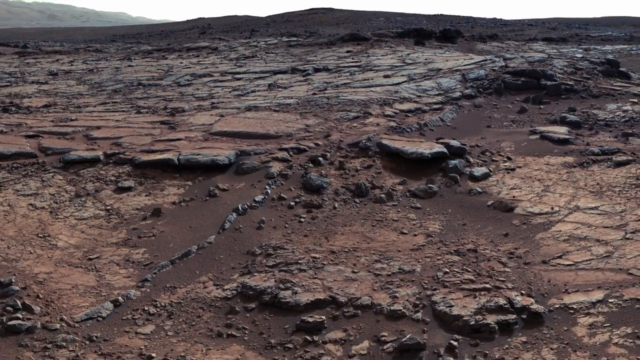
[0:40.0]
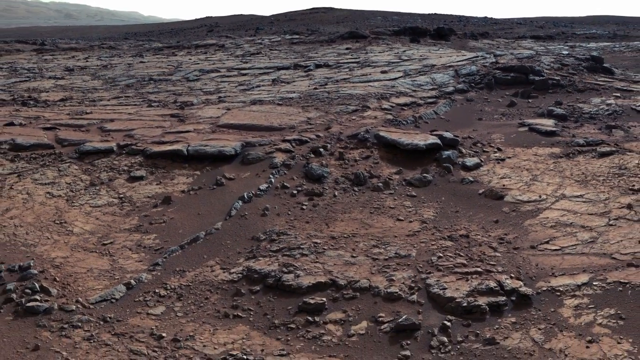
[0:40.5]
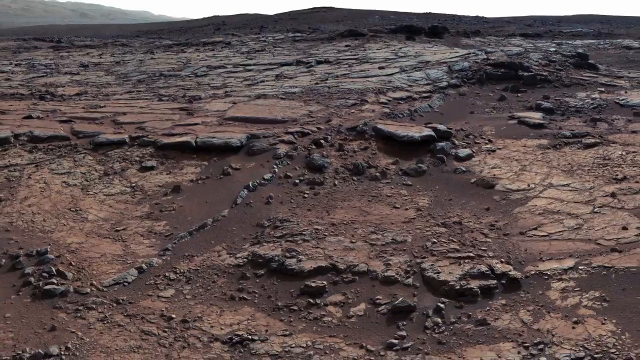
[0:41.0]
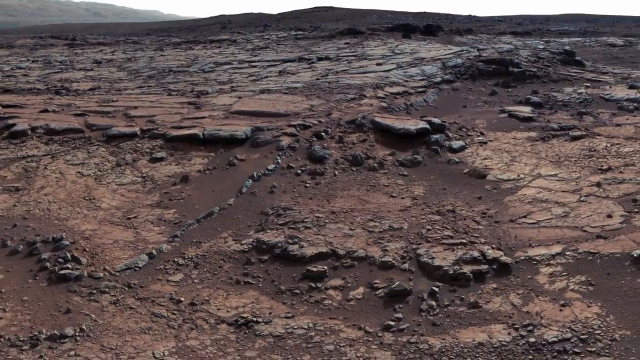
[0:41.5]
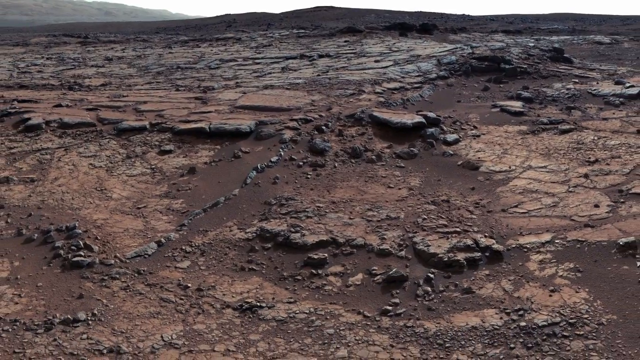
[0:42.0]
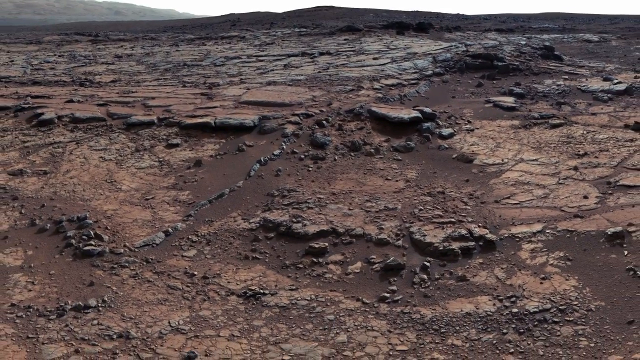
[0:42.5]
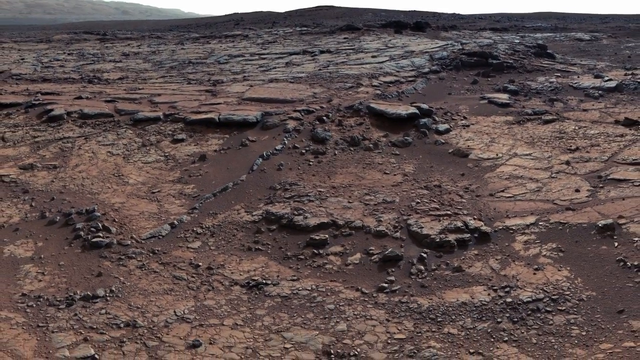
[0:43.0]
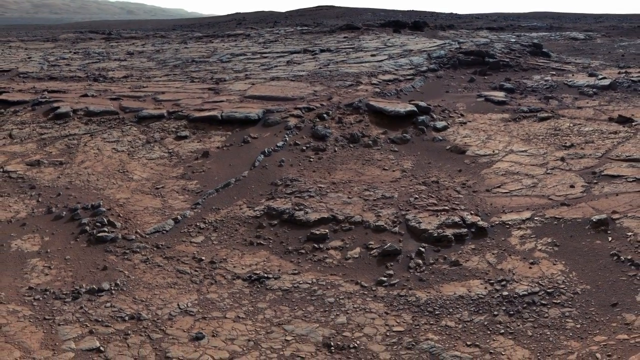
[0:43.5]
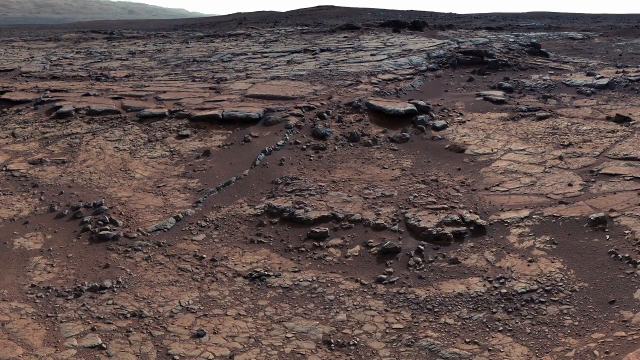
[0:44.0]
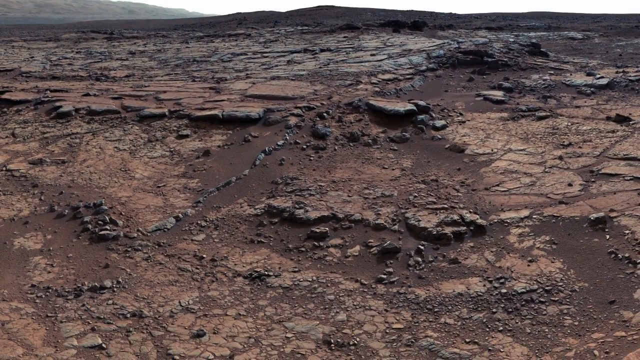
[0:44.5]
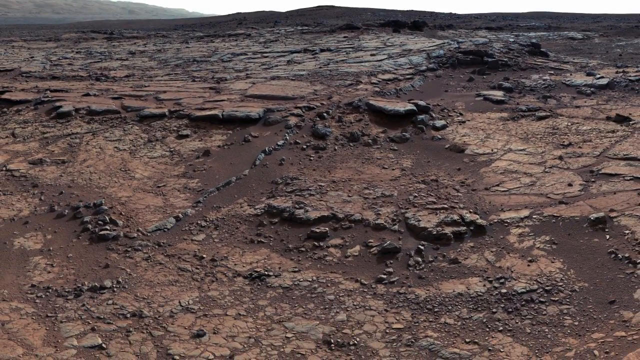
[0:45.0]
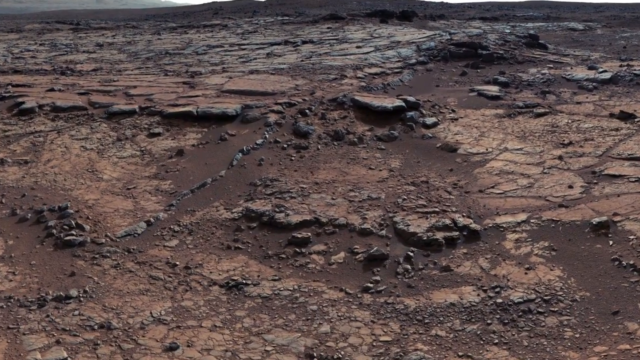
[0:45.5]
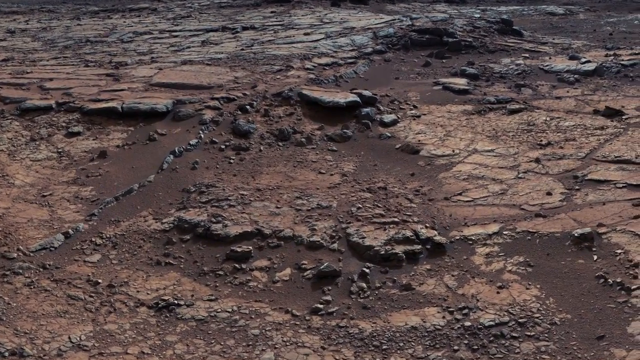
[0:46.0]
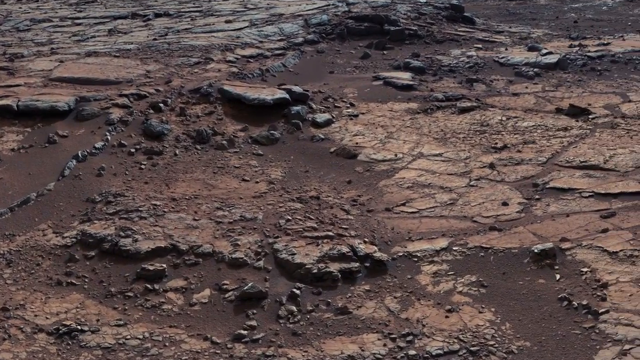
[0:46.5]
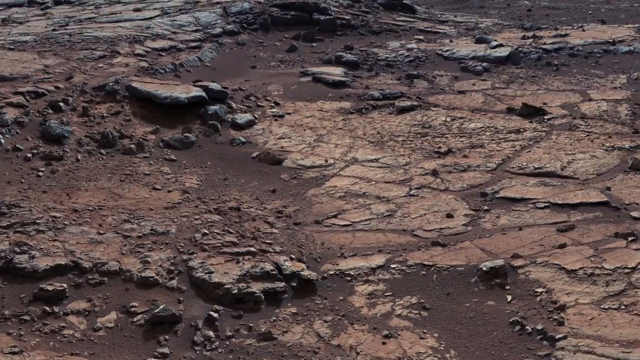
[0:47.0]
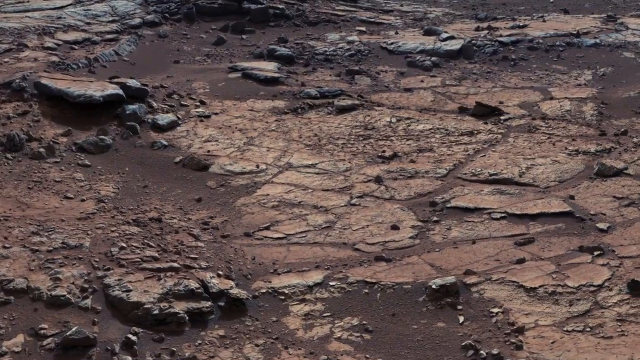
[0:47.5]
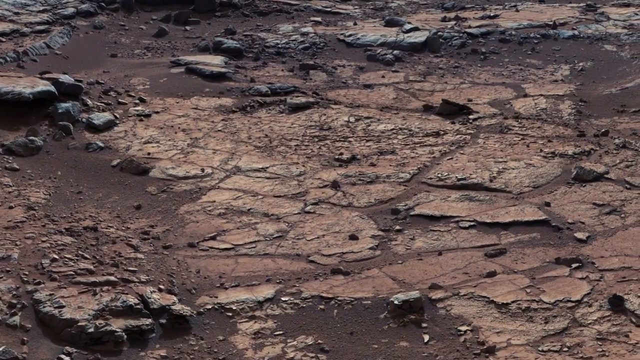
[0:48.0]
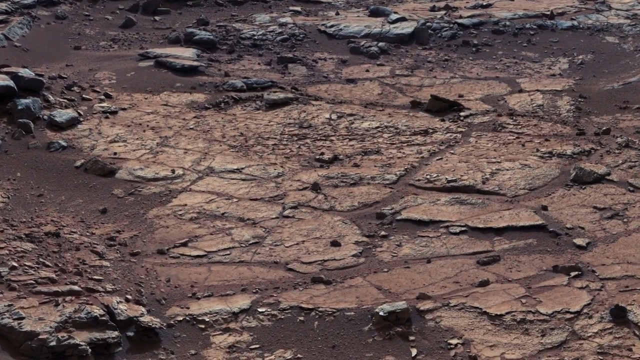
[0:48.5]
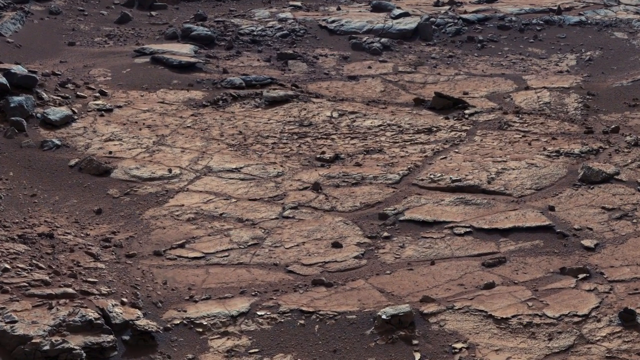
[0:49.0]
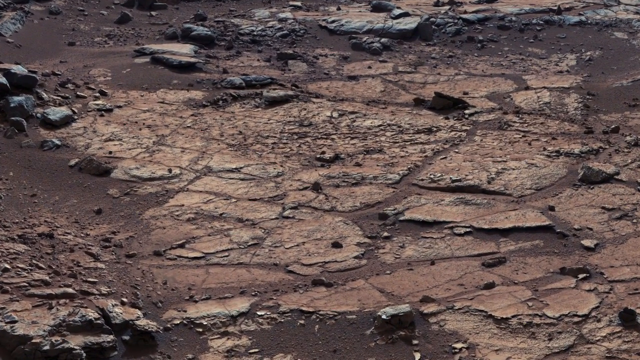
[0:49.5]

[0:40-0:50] Close-ups of the Mars project continue. The pictures zoom in and out to give a closer look. This picture shows none of the equipment; it zooms in and out across an expansive area of Mars that seems never-ending, with what looks like some mountains near the end and what looks like a lot of rocks or debris. It is the same picture, with different parts of Mars shown close up.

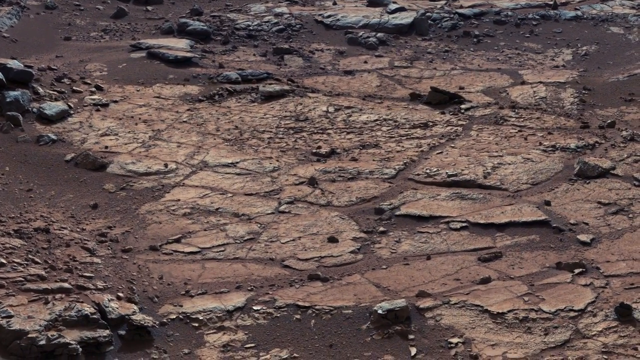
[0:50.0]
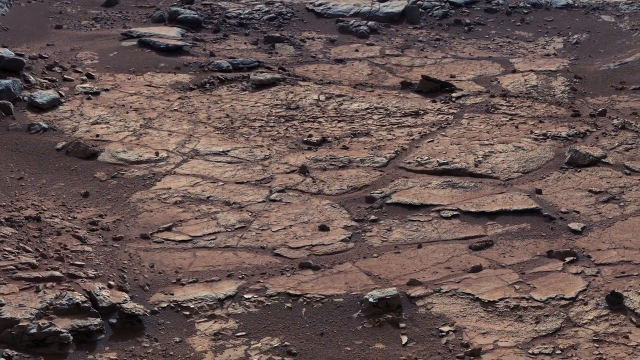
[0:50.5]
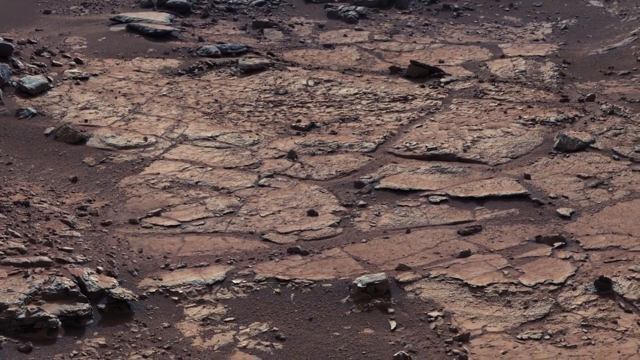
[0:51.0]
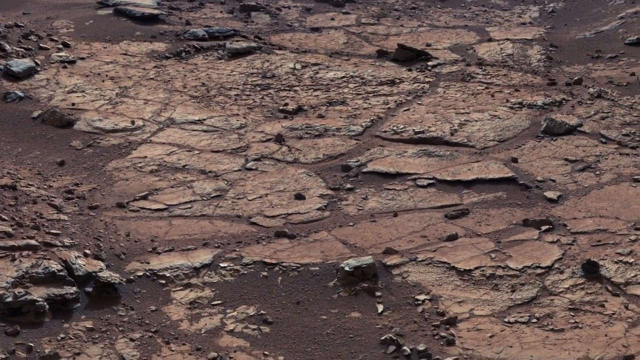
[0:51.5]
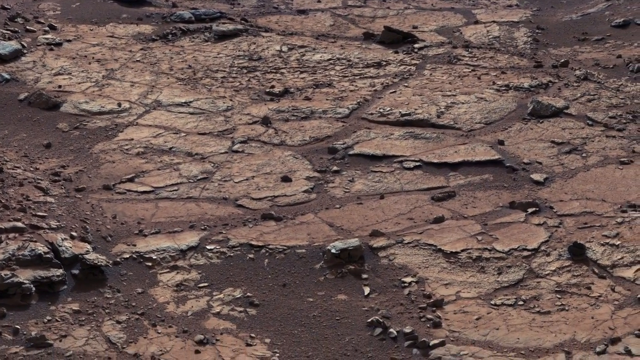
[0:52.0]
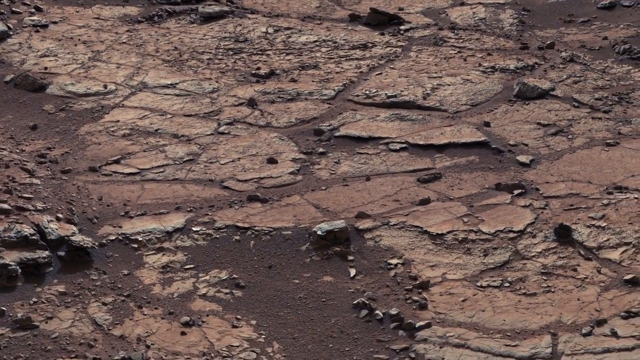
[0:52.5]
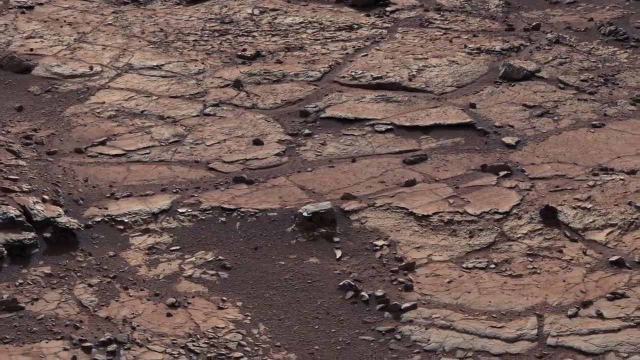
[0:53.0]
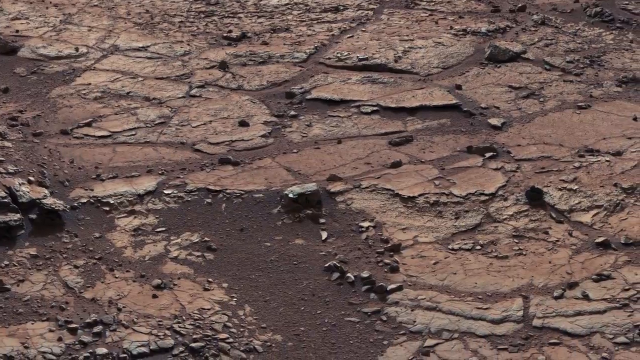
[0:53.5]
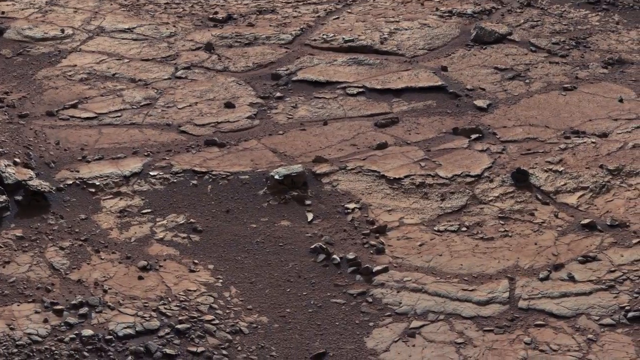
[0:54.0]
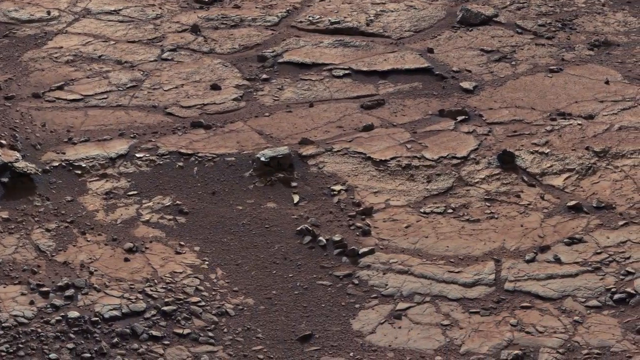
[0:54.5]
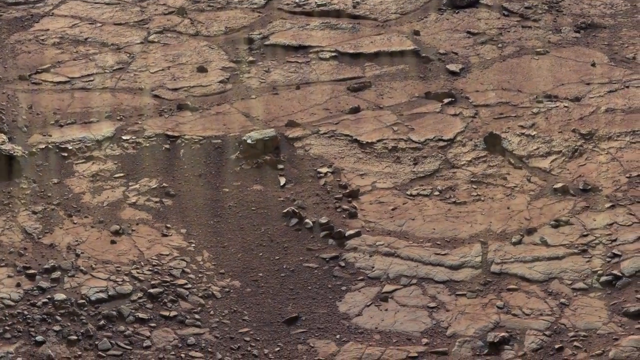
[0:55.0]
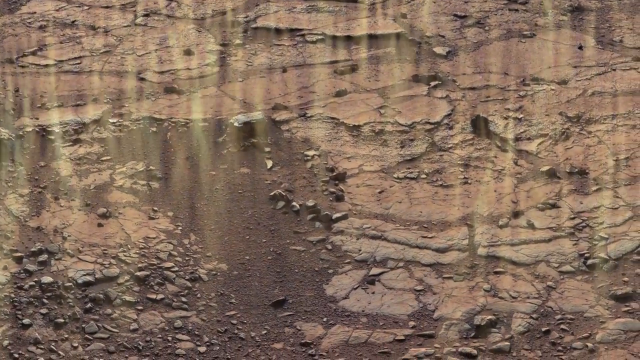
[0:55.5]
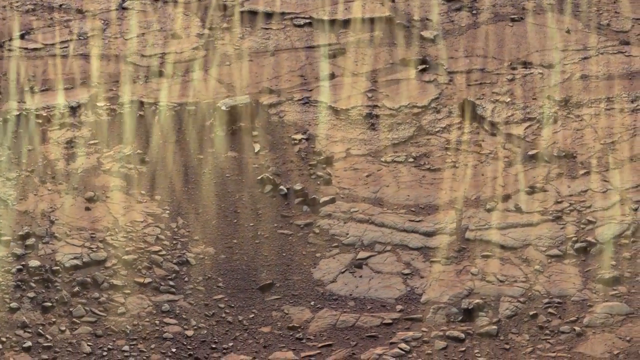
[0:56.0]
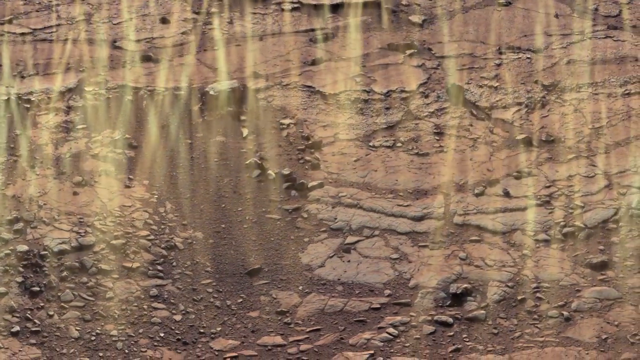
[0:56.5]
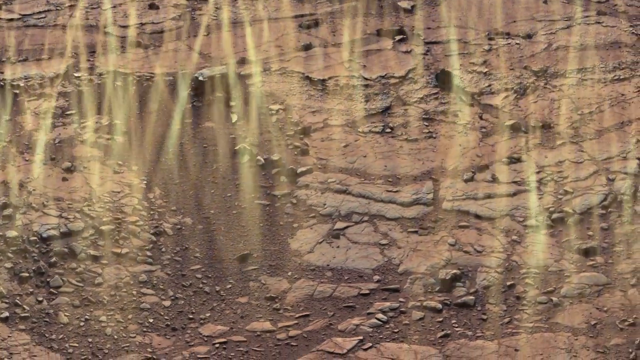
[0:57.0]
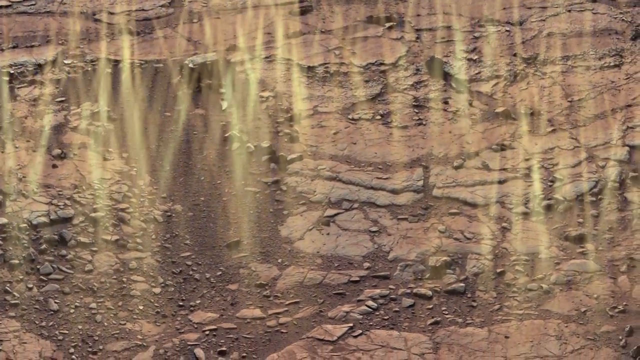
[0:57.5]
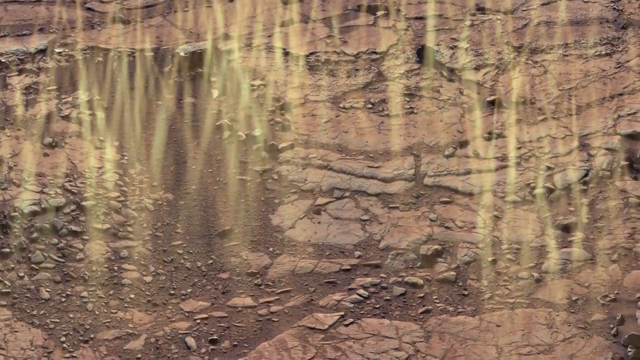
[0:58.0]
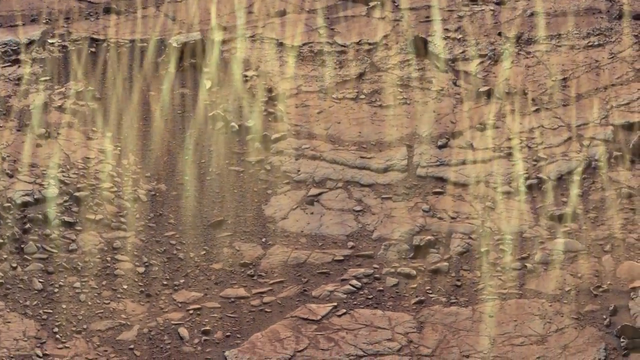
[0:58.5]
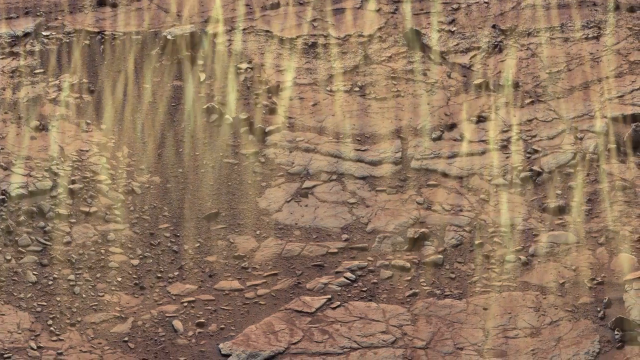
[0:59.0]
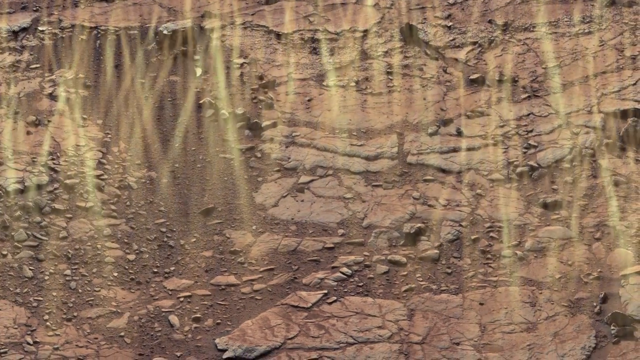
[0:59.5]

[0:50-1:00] The exploration of Mars continues with shots that go in and out on the researcher himself, as well as highlighted areas with some shadowing light in the background. The view keeps focusing on one particular area of an expansive photo of Mars, with the highlights, which seems to show some broken rocks and some kind of dirt. The shots switch back and forth between this area and the researcher.